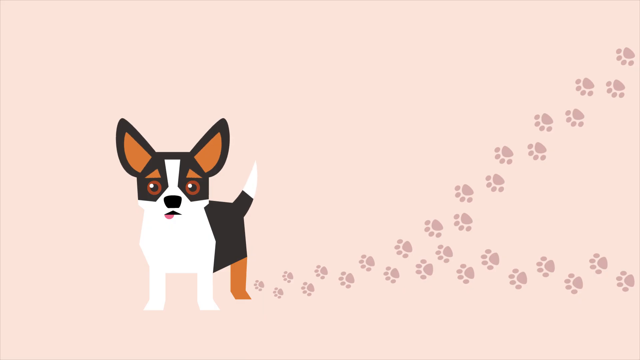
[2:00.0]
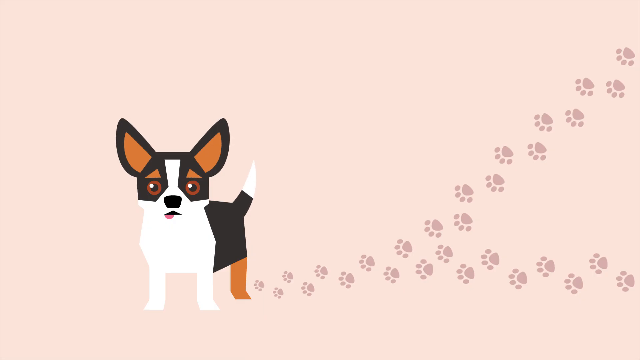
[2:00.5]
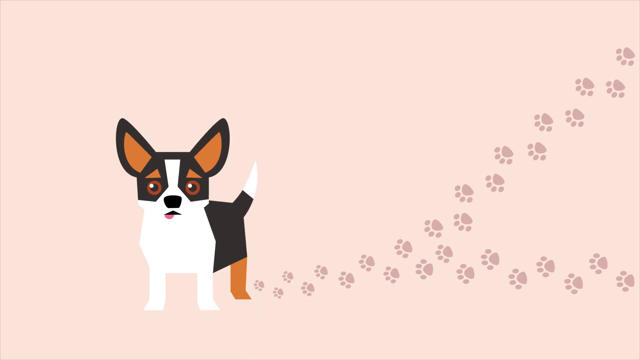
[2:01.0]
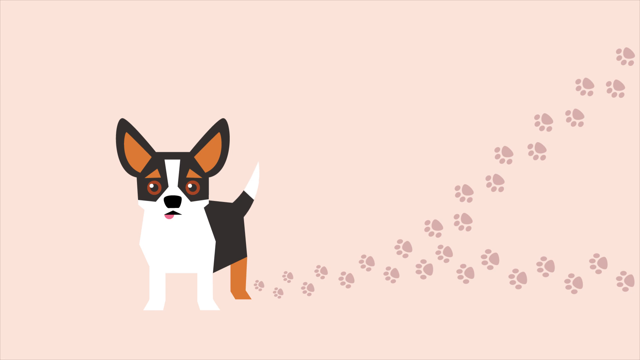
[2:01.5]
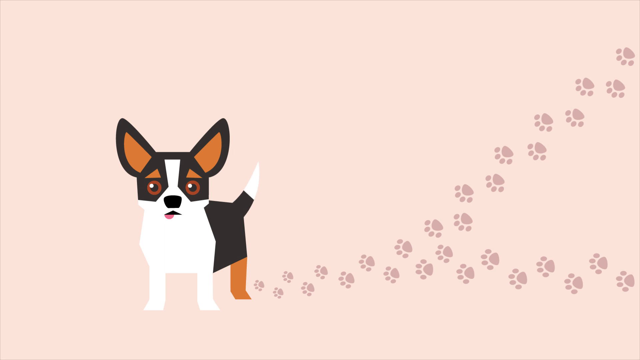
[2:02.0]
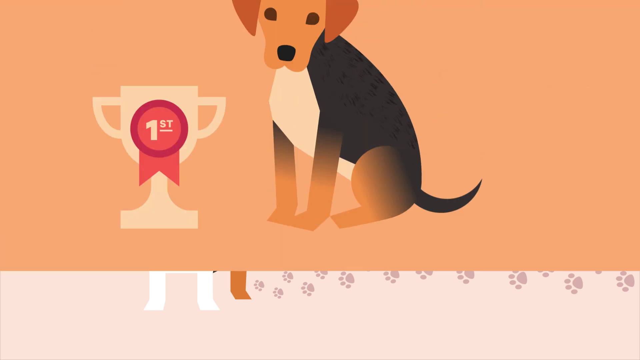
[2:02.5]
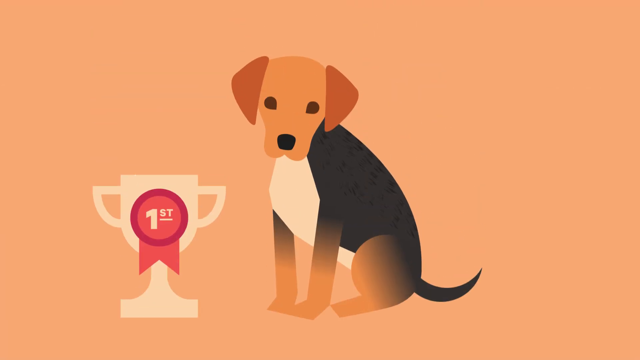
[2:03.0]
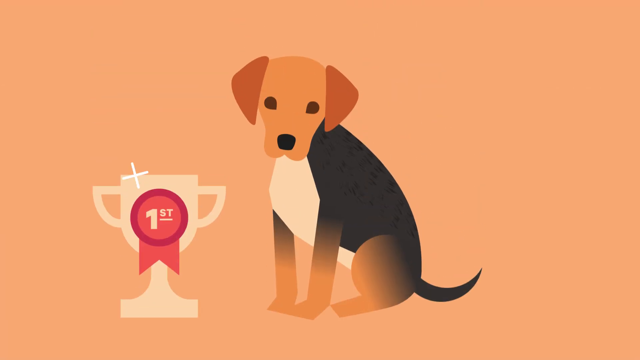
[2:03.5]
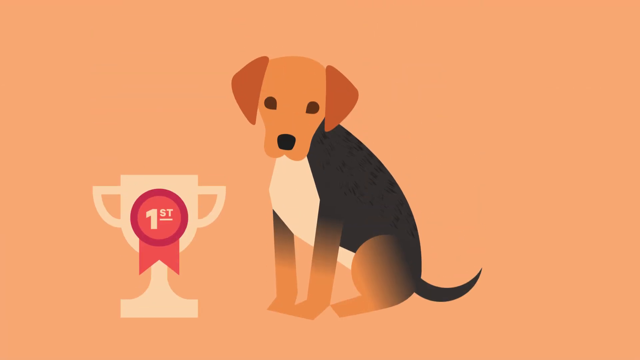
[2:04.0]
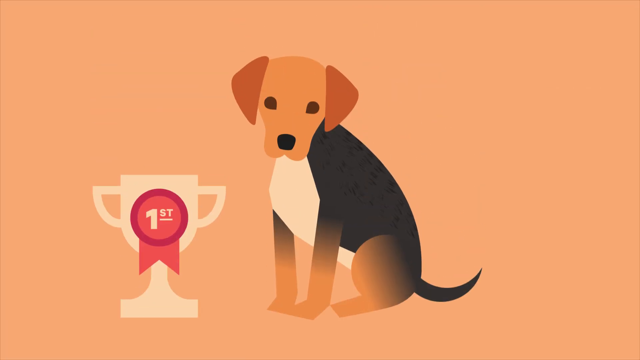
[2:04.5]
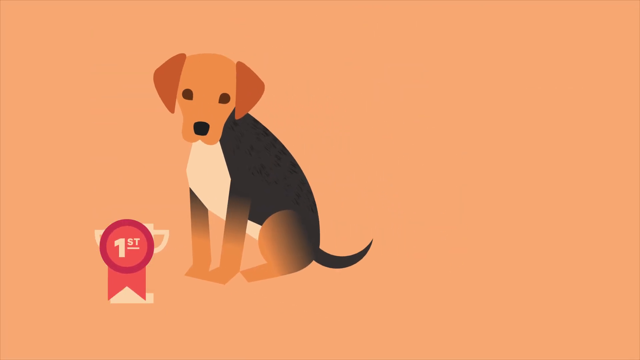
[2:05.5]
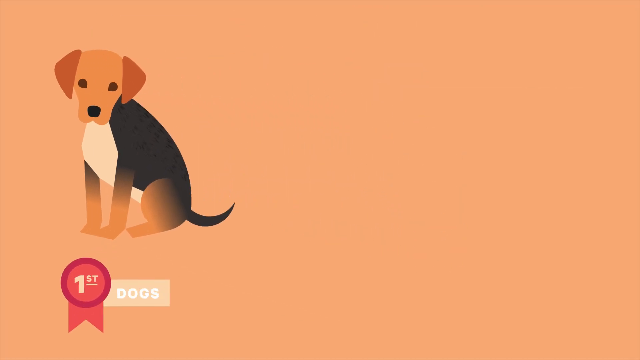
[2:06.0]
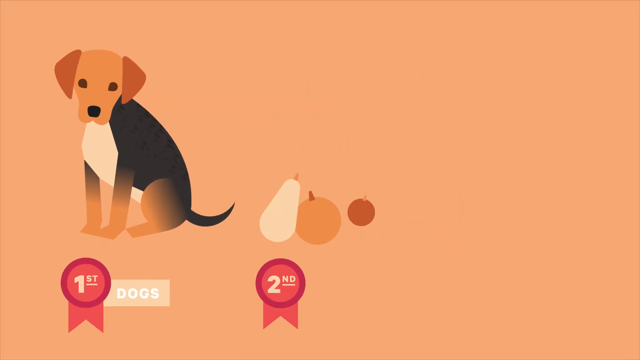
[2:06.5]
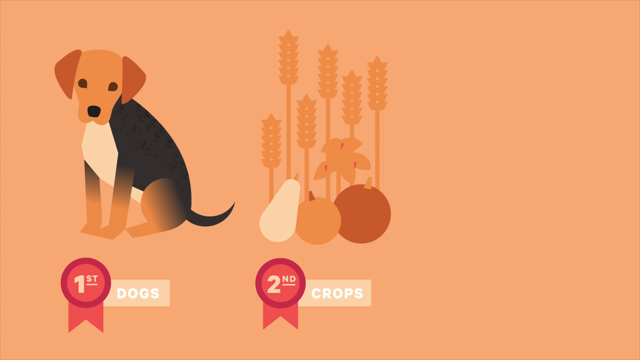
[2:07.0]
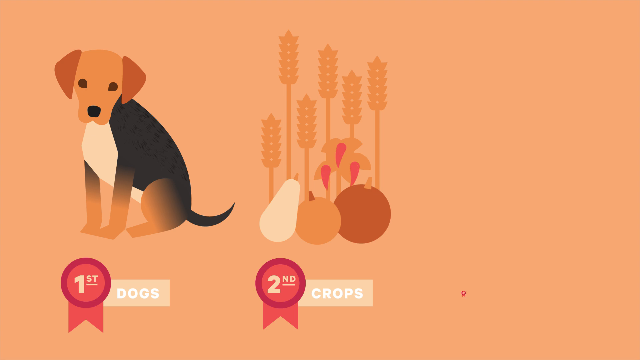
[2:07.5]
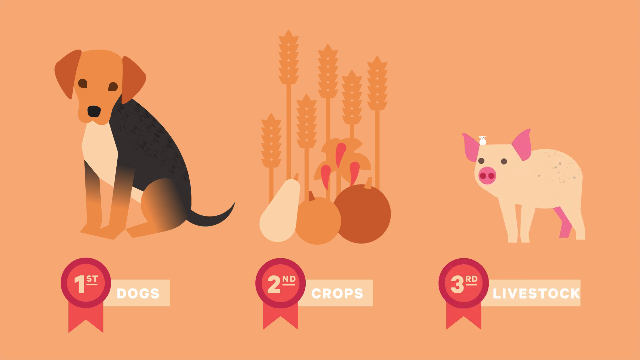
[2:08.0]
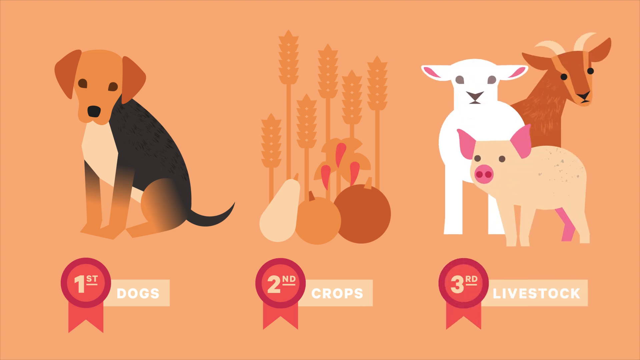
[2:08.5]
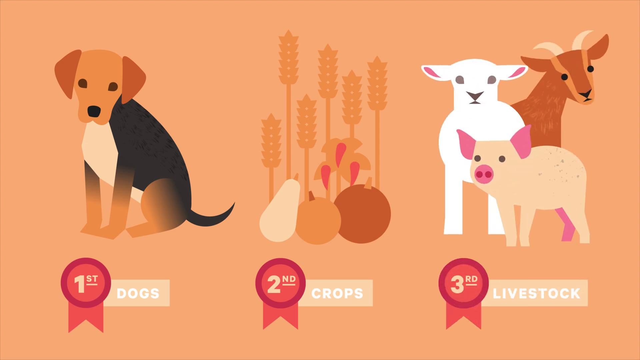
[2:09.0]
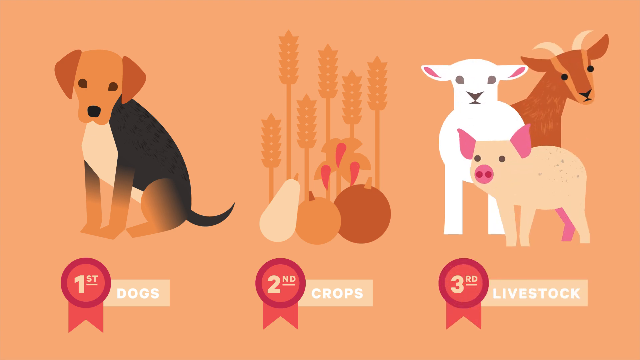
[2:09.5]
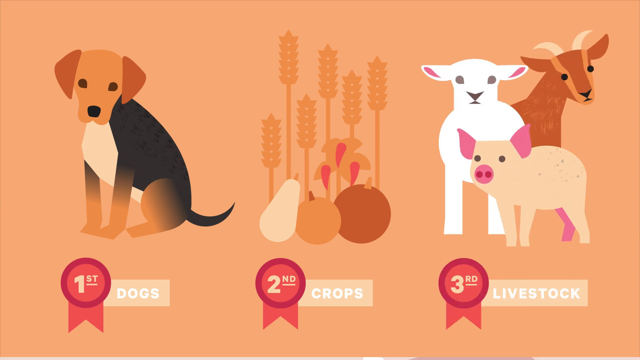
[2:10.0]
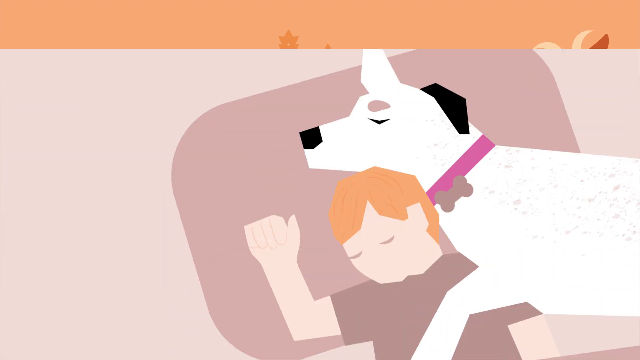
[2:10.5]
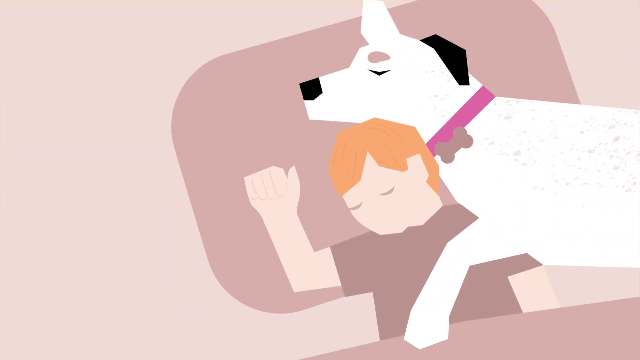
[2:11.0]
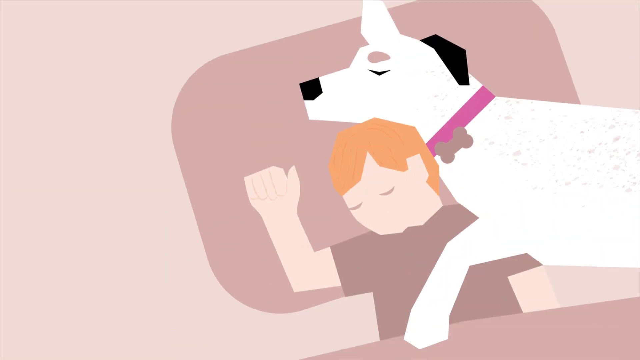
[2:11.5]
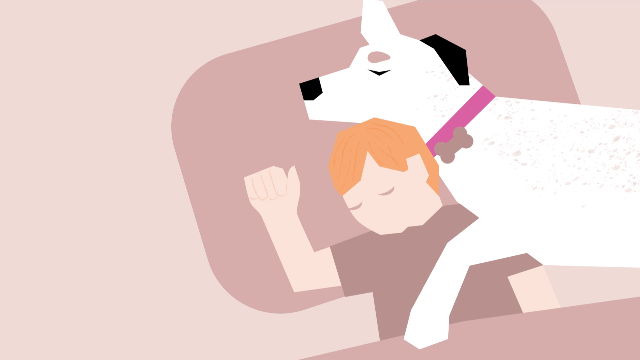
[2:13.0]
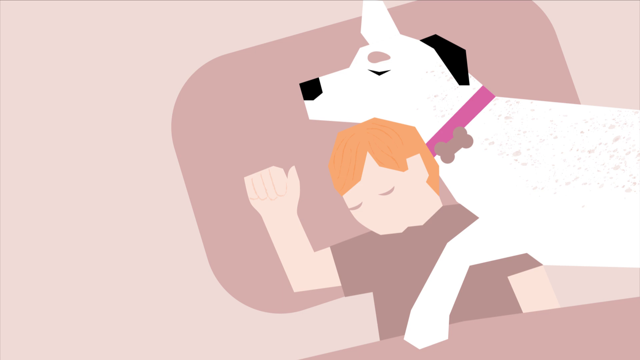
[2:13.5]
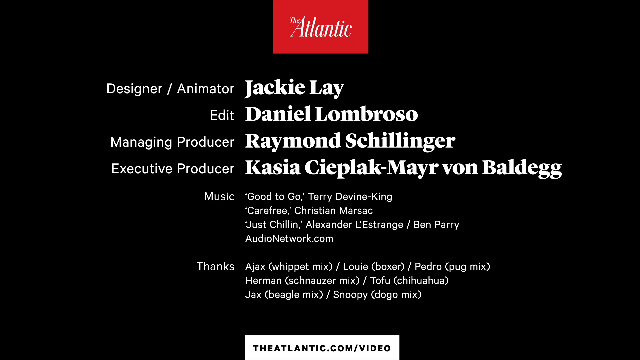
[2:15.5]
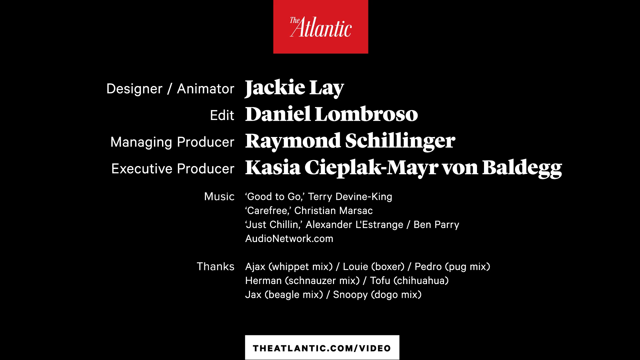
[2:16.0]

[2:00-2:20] A small, short-haired dog is in front of a beige background, with a series of paw prints behind it moving toward the center left of the screen. The dog's back is black, its back paws are brown, its underbelly and front paws are white, its eyes are brownish-red, and its ears are somewhat pointed and sloped up; it has a short, slightly curled tail, which it wags. The scene changes to another dog with a black back, front and back paws that are brown transitioning into black, a white underbelly, a brown and tan head, drooped-forward ears, a round head, and slightly small jowls. Next to it is a trophy reading "First Place," with a sparkling indicator over it and a ribbon on it. The ribbon transitions to an illustration at the bottom of the screen, followed by an illustration of crops, wheat and gourds, in the center of the screen with "Second" over them. Another ribbon reads "Third" and "Livestock," with an illustration of a pig, a goat and a sheep on the right side of the screen. The scene changes to a light-skinned child with orange hair lying in bed, resting on a pillow, with their dog next to them; the dog is short and white-haired, with a black ear, a black nose, and a pinkish-purple collar with a bone icon on it. Finally, an illustration of the Atlantic appears, followed by credits in white lettering at the center of the screen listing the designer, editor, manager, producer, executive producer, music and others, with a number of people presented.